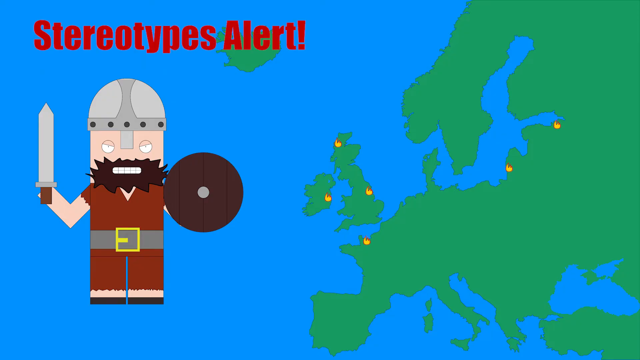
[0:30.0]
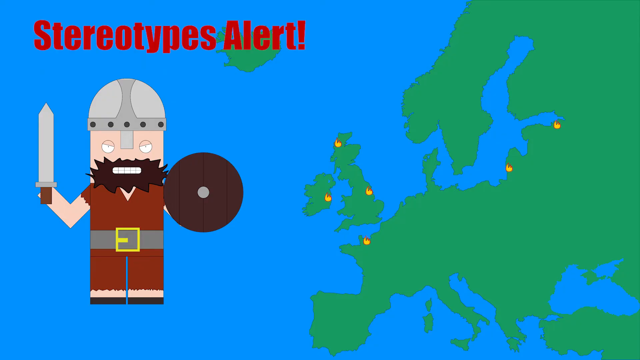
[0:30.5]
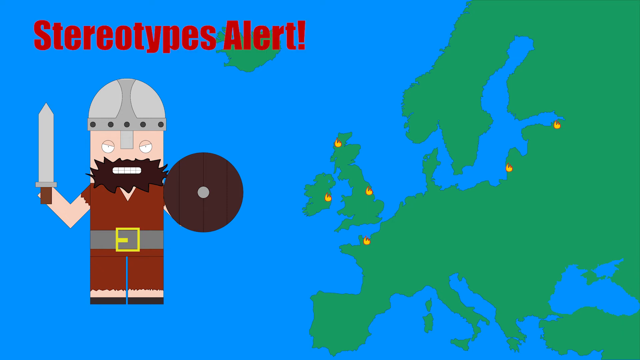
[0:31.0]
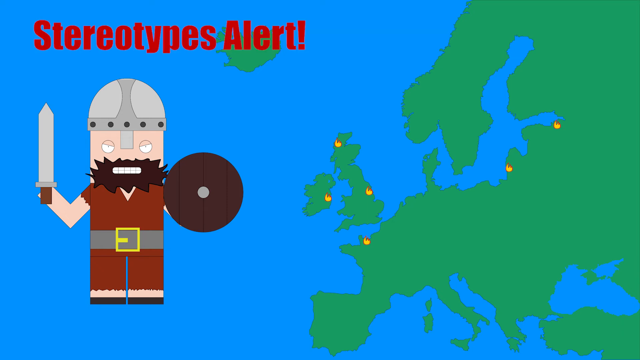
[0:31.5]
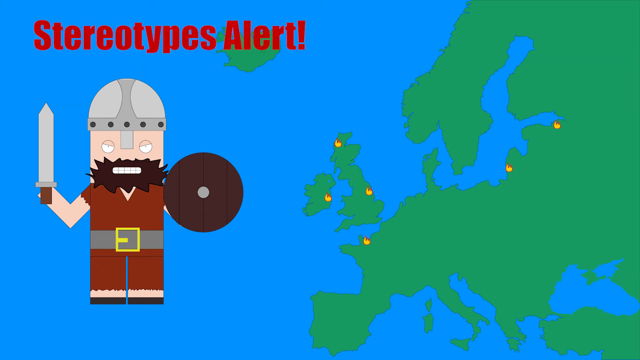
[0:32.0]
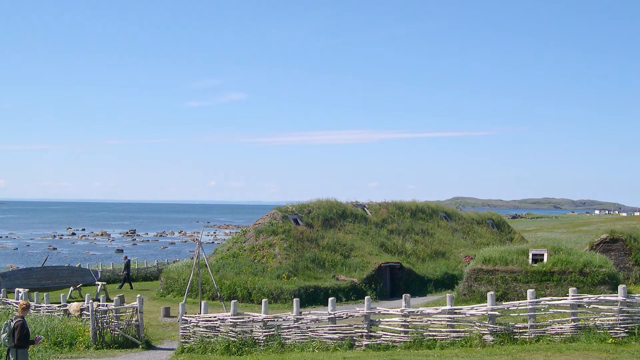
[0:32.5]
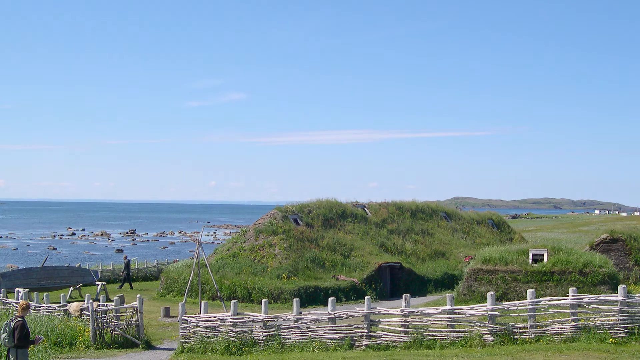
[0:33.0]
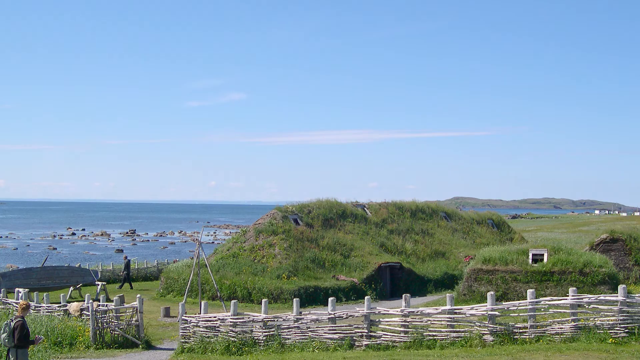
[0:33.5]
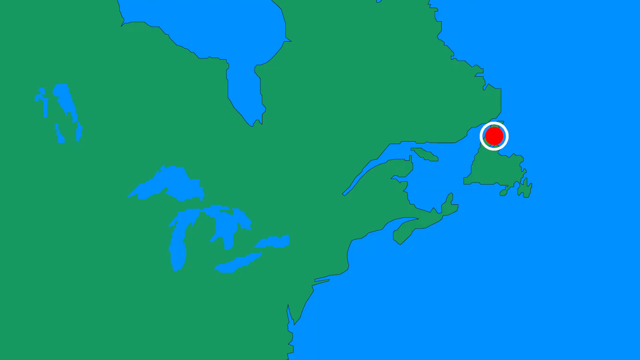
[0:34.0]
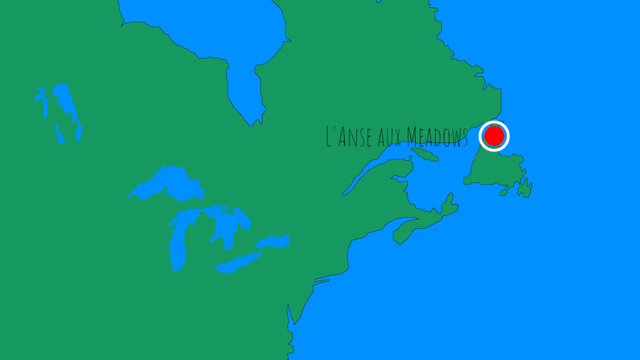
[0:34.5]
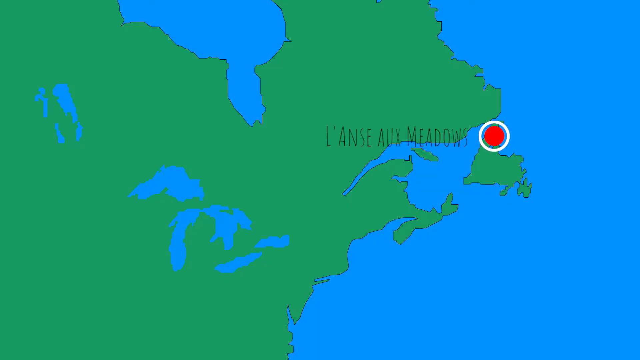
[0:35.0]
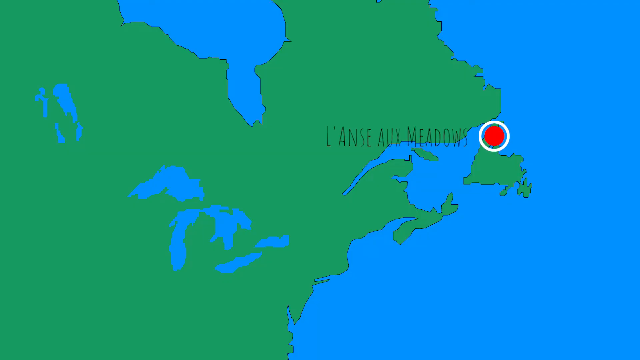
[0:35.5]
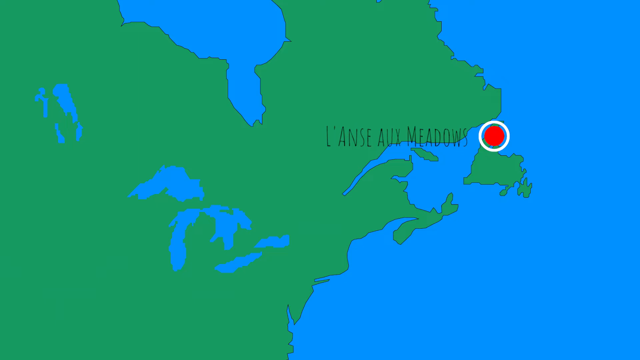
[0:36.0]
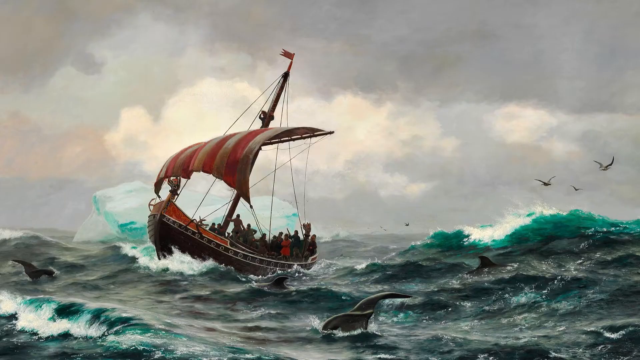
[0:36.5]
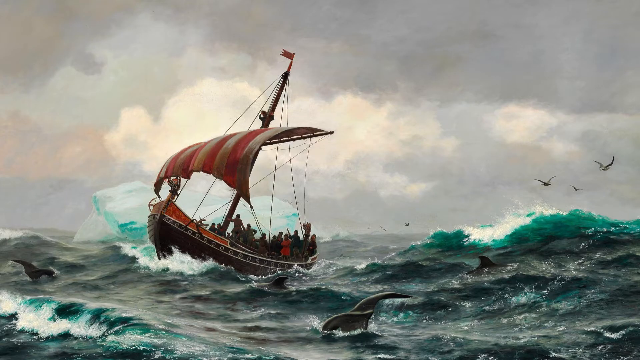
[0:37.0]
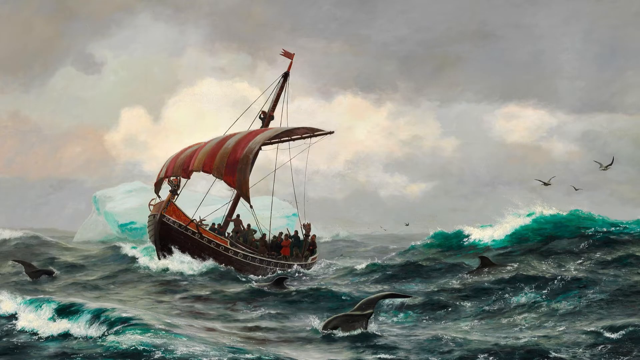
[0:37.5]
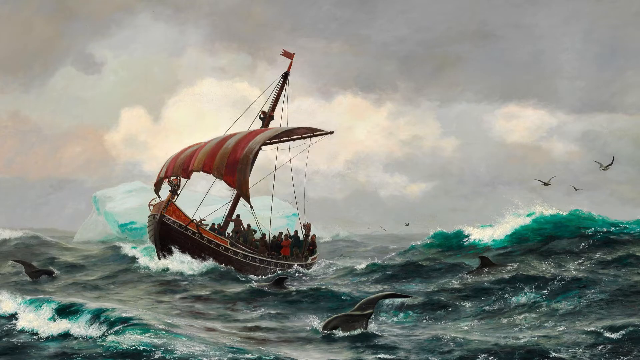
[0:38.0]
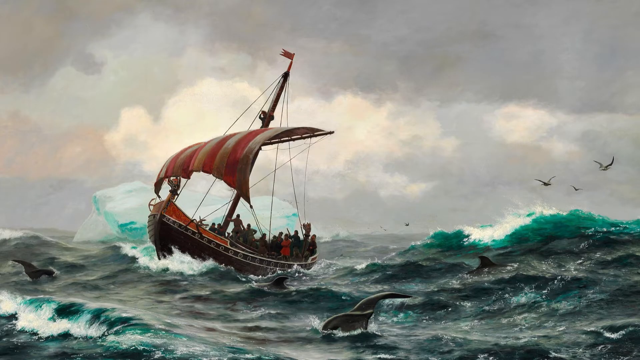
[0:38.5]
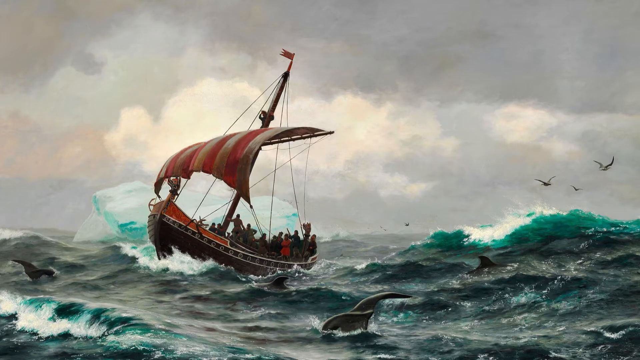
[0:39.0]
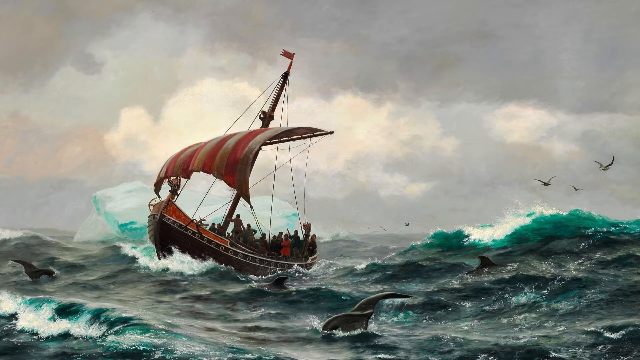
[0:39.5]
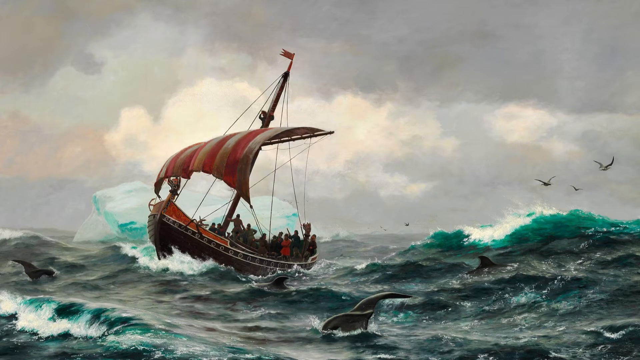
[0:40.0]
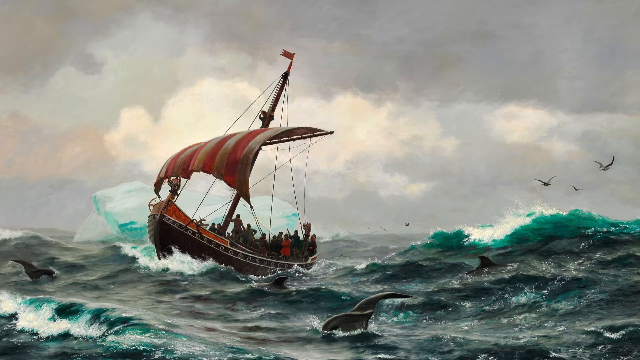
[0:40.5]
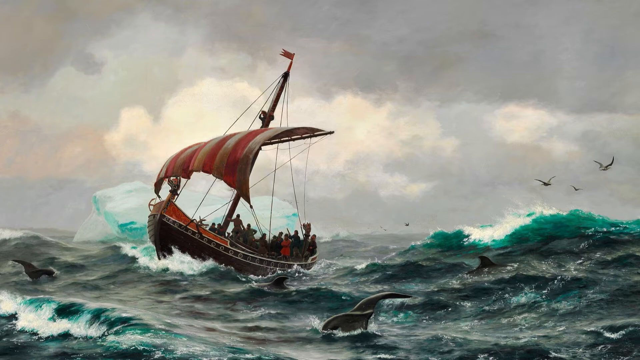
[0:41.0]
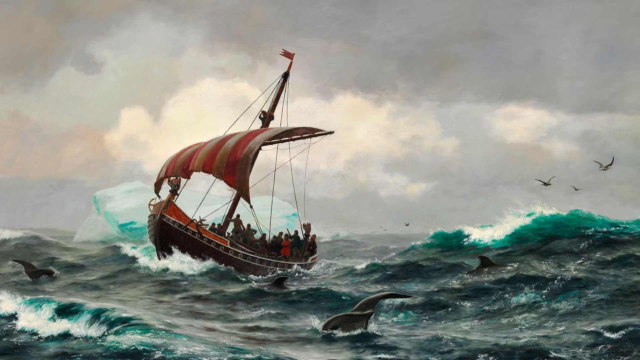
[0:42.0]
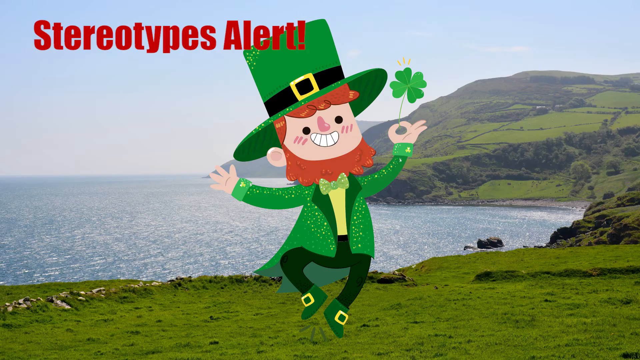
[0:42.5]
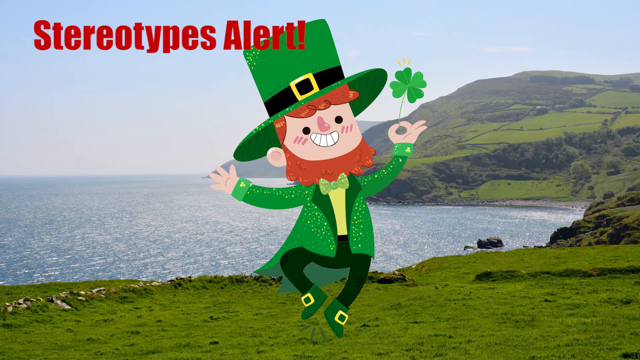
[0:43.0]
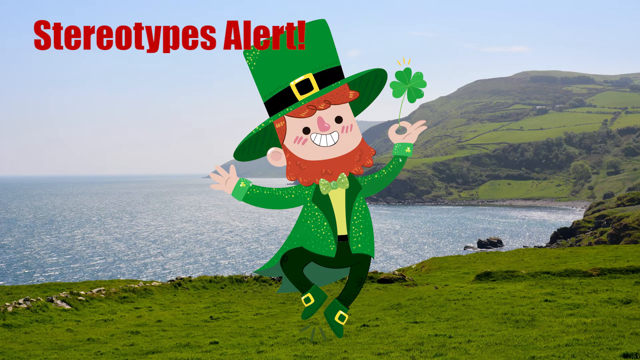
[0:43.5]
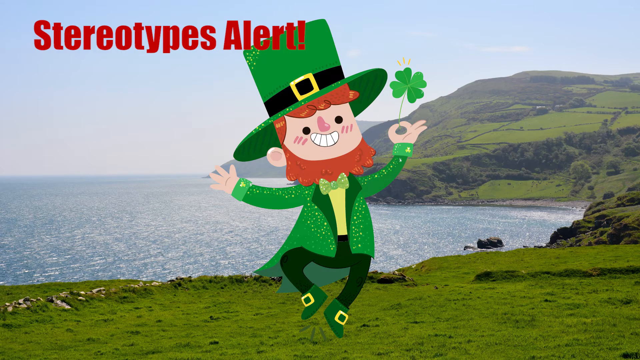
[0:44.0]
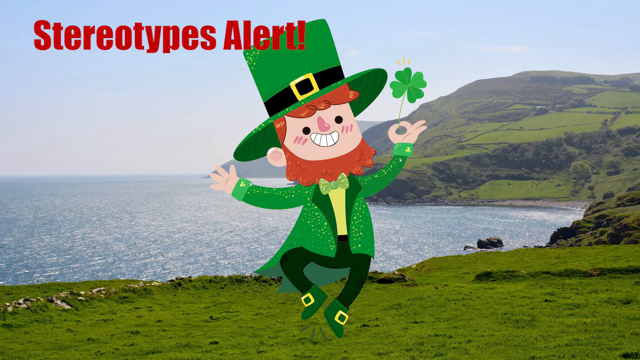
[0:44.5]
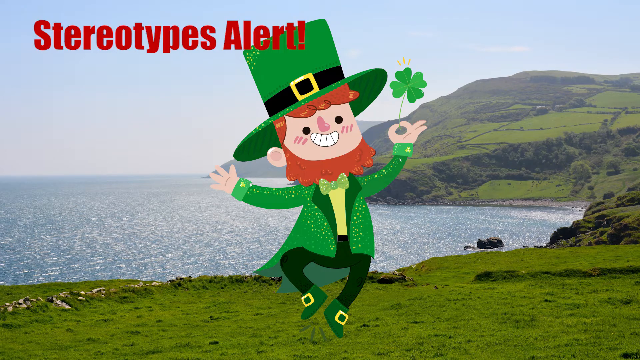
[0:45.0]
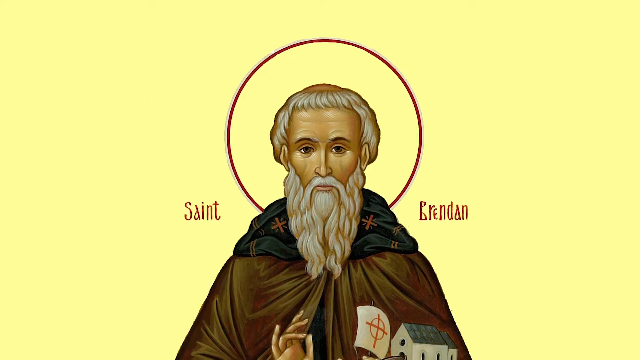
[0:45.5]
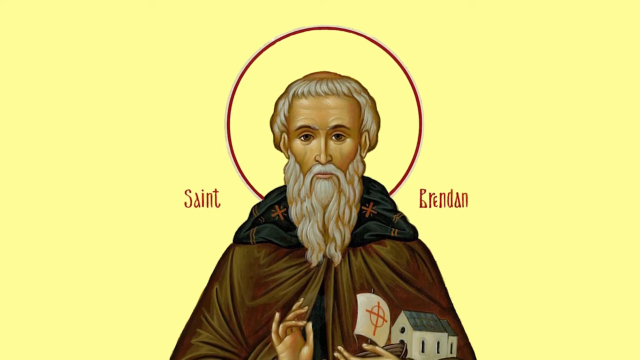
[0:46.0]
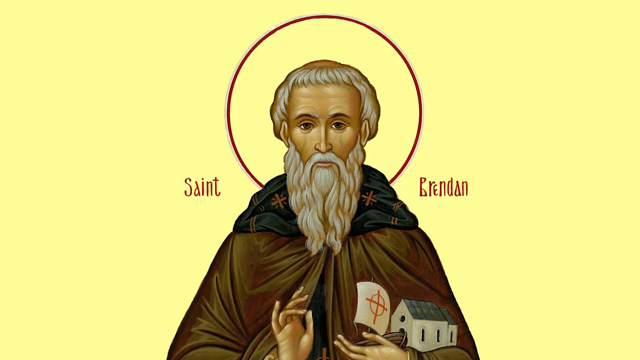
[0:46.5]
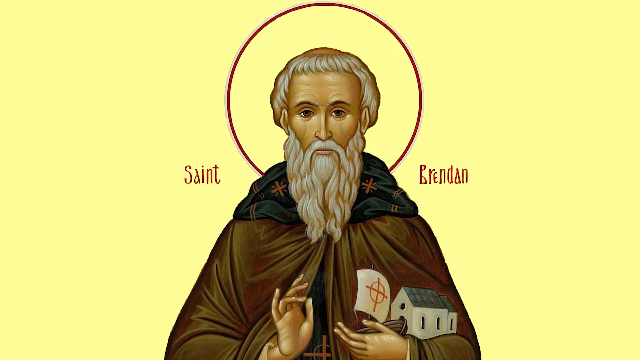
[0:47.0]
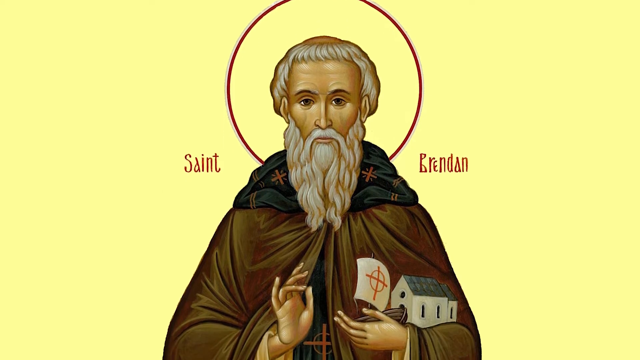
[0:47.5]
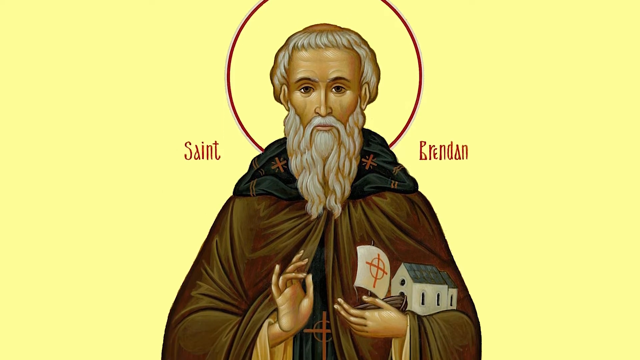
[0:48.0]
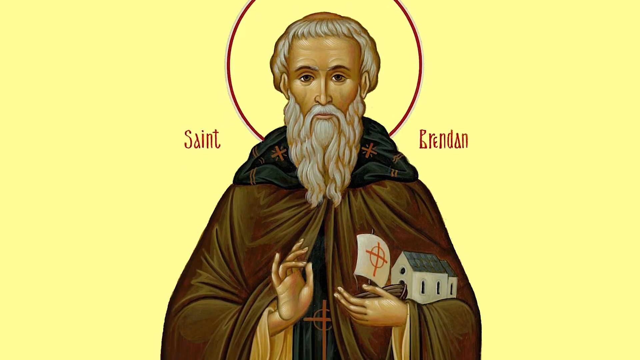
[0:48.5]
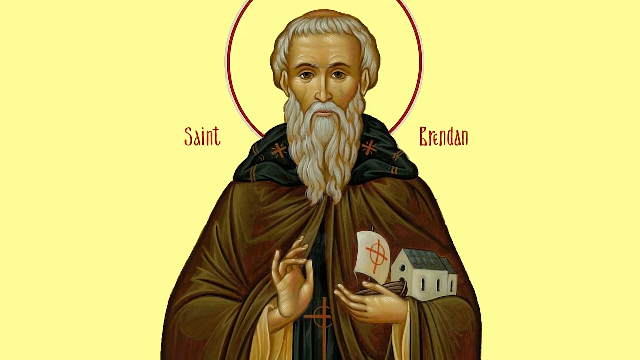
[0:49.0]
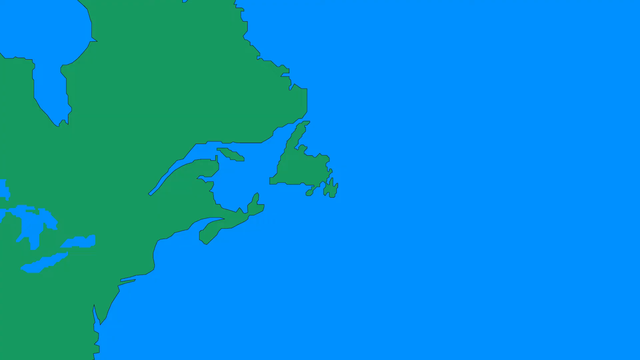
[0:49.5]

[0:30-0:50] The words "stereotypes alert" appear on the screen, and underneath them is a cartoon depiction of a Viking. Elsewhere on the screen is a map of Europe. An area marked in red on a map is labeled as L'Anse aux Meadows. Then comes an image of an old wooden ship with a sail, sailing on rough ocean waters. After that, "stereotypes alert" appears on the screen again, with the cartoon Viking under it and the European coastline, including Britain, over to the right. The video is in a cartoon style.